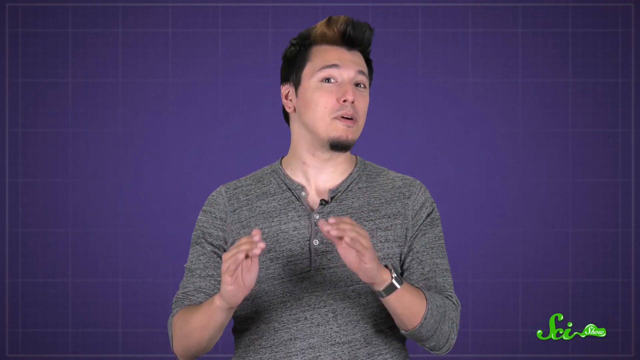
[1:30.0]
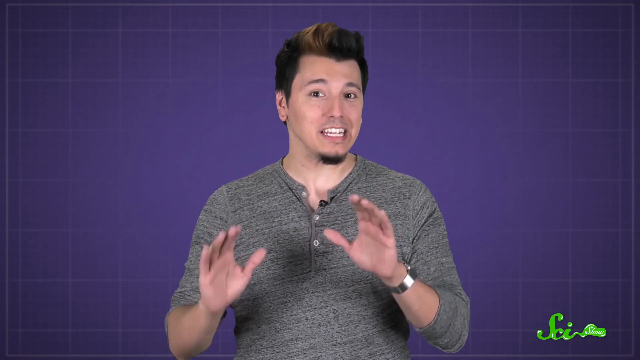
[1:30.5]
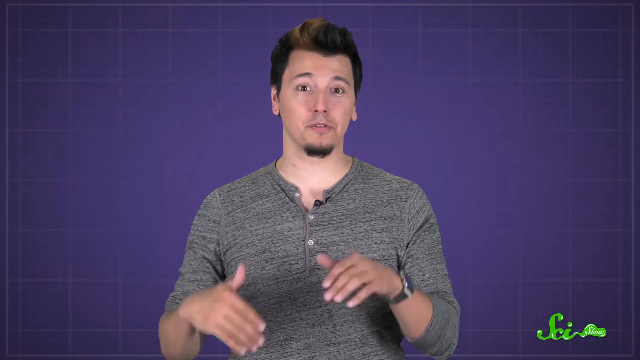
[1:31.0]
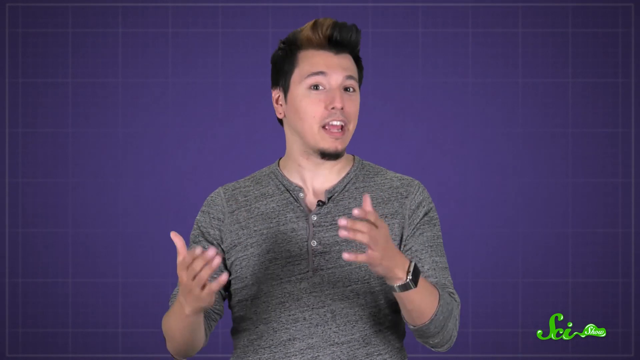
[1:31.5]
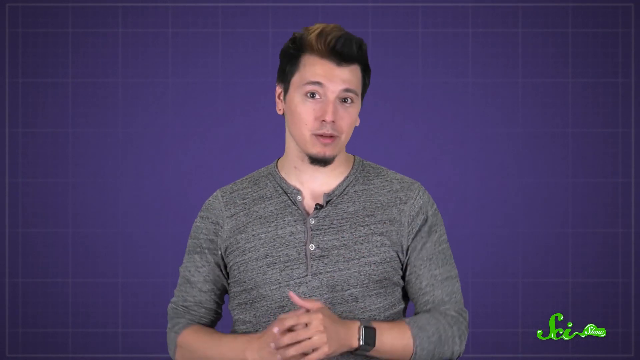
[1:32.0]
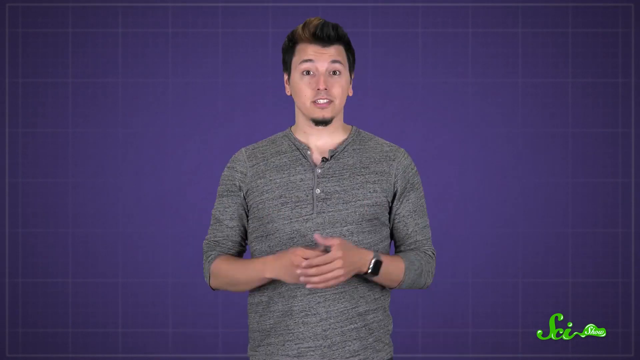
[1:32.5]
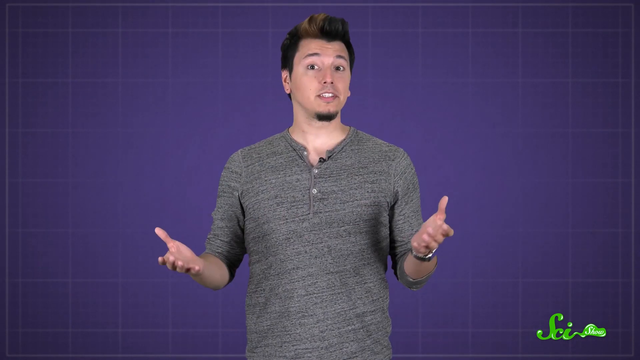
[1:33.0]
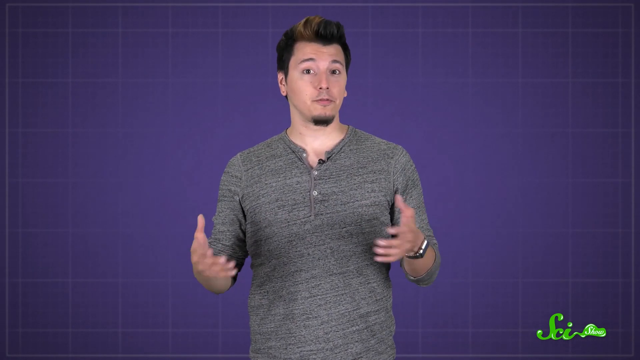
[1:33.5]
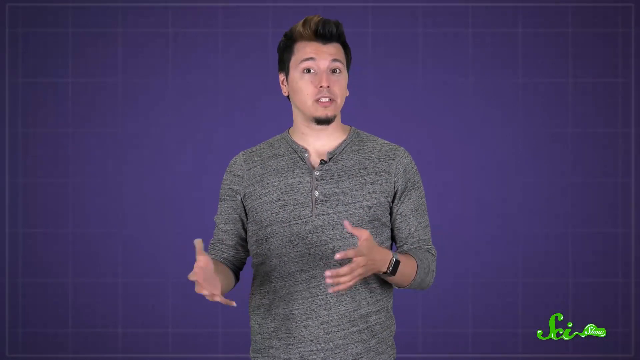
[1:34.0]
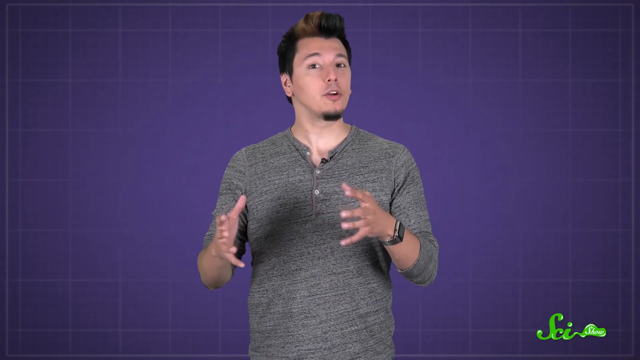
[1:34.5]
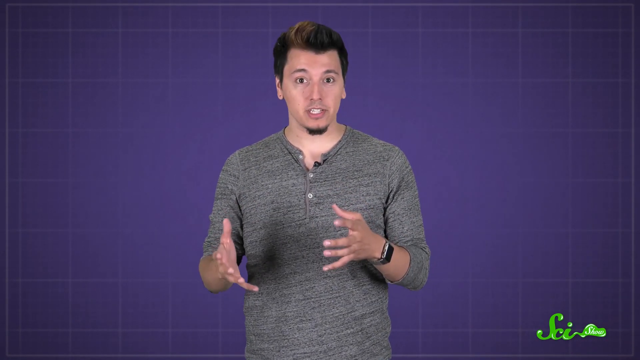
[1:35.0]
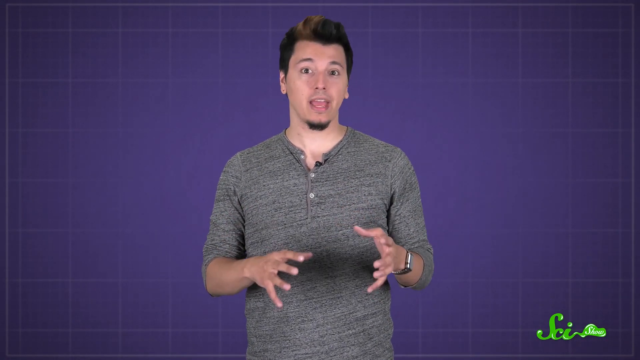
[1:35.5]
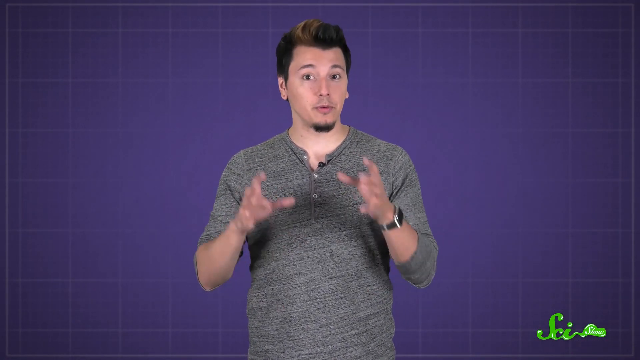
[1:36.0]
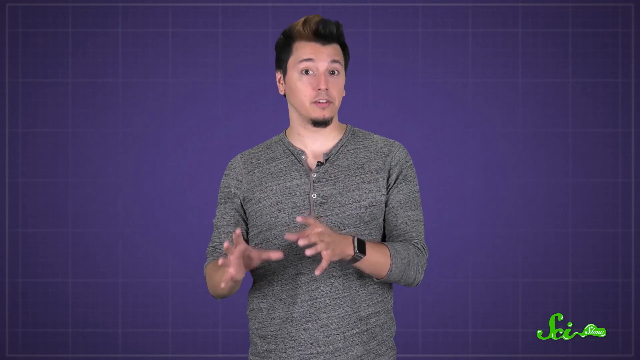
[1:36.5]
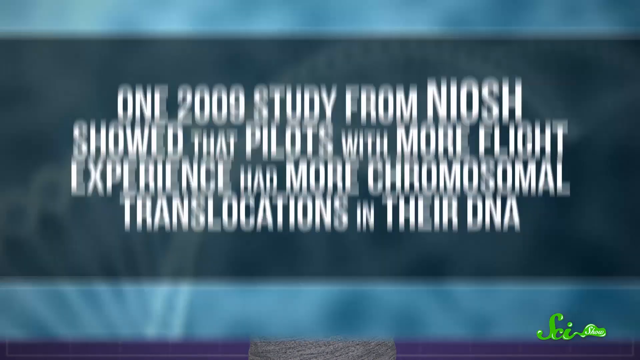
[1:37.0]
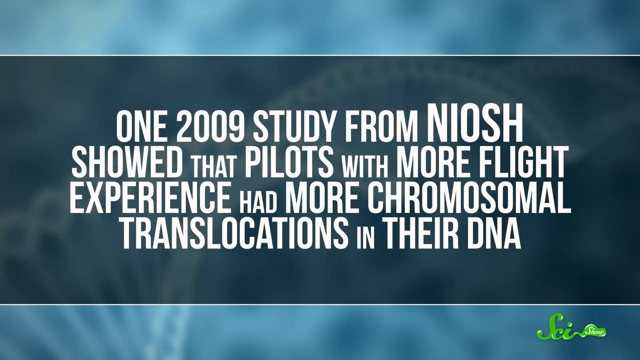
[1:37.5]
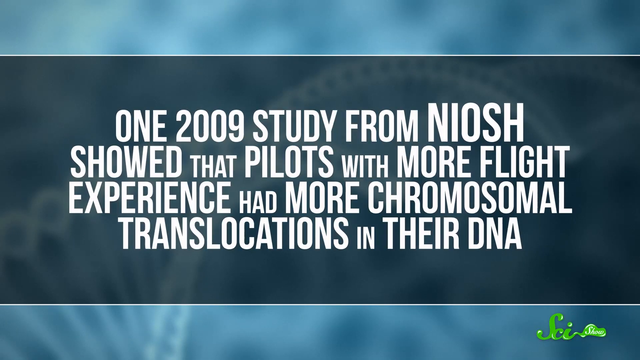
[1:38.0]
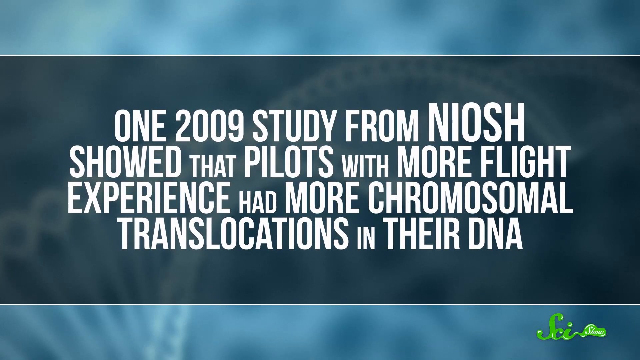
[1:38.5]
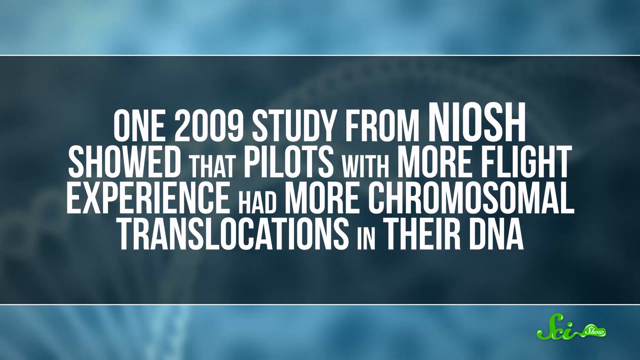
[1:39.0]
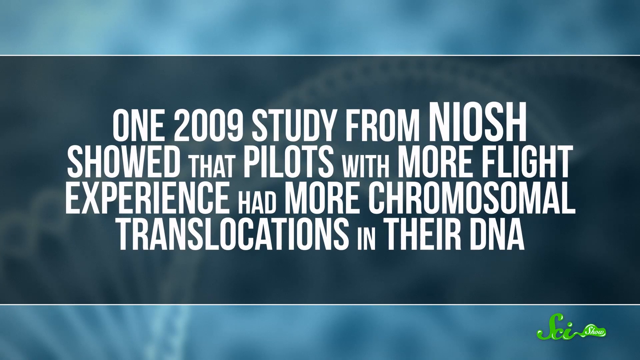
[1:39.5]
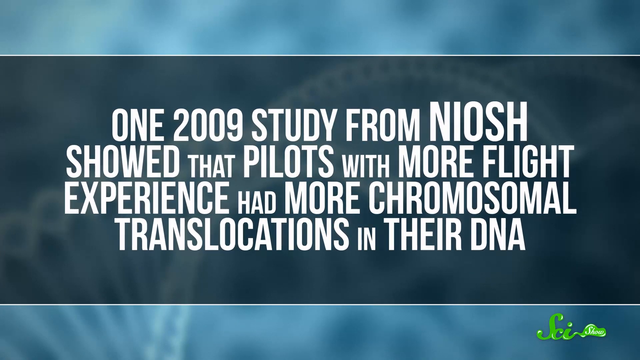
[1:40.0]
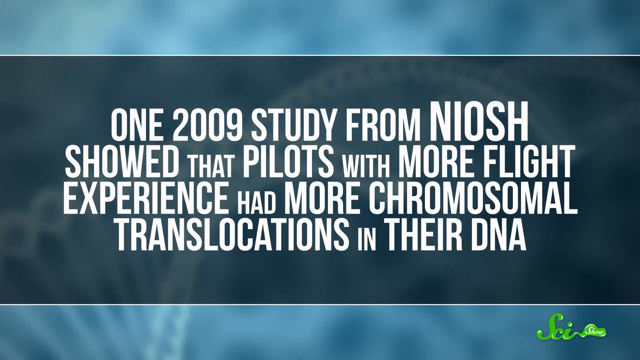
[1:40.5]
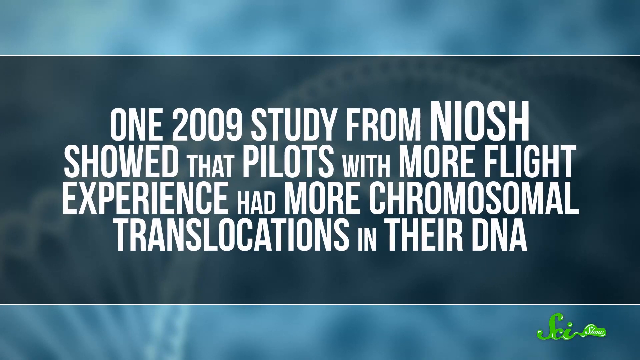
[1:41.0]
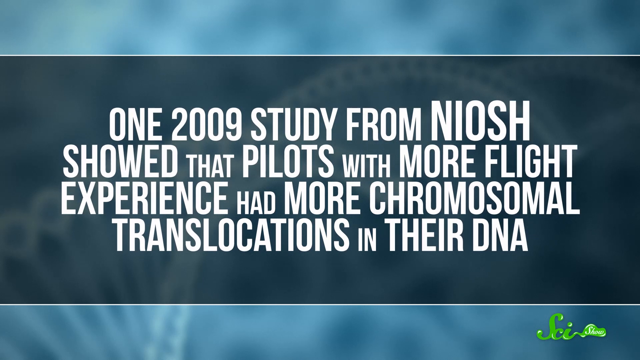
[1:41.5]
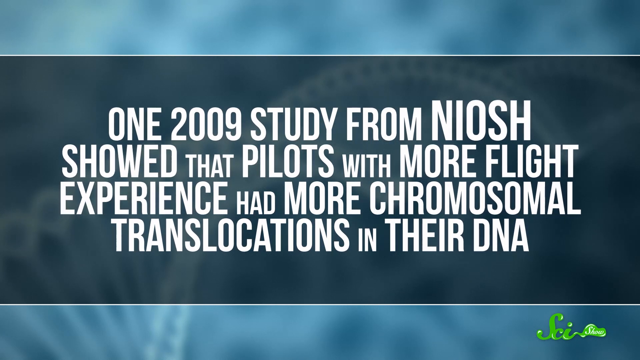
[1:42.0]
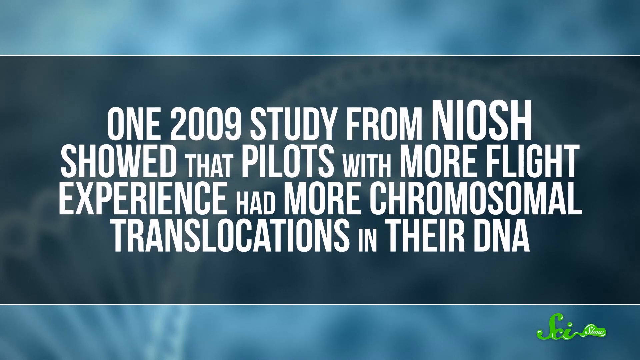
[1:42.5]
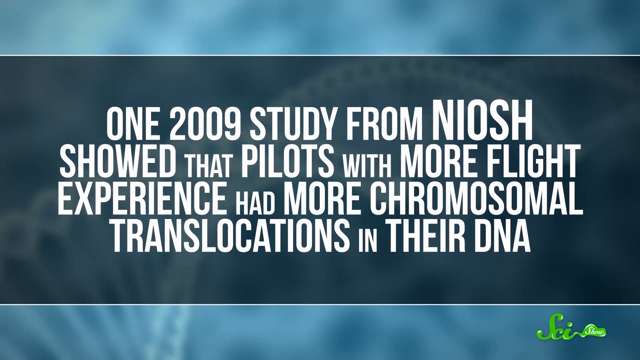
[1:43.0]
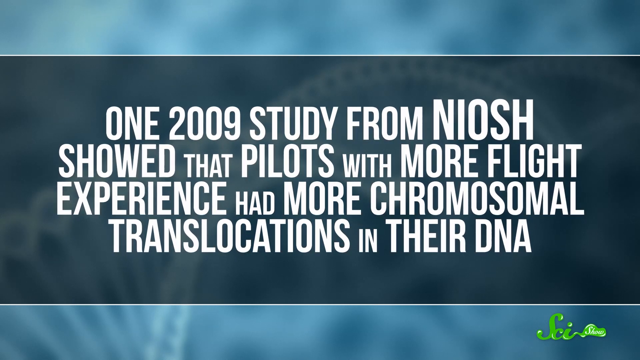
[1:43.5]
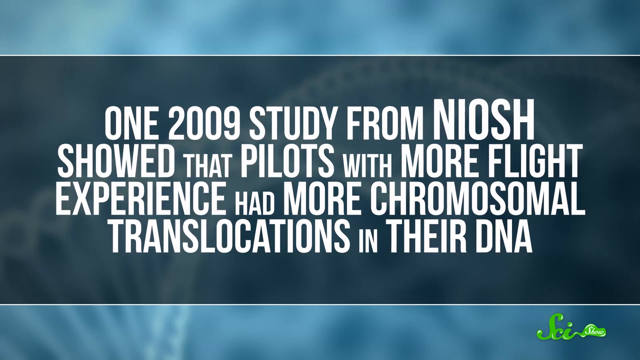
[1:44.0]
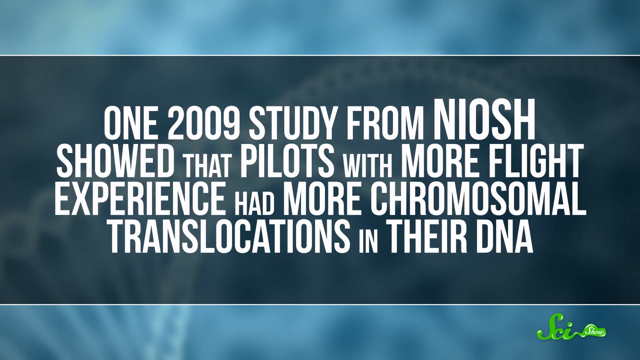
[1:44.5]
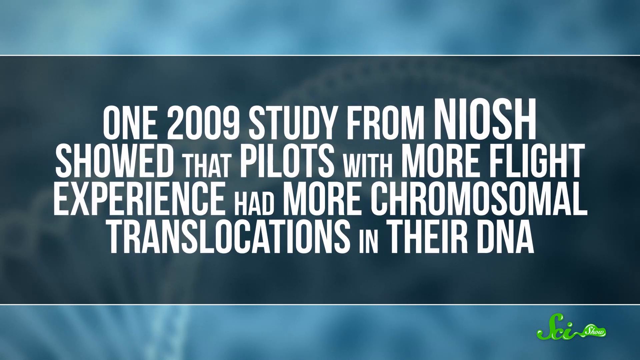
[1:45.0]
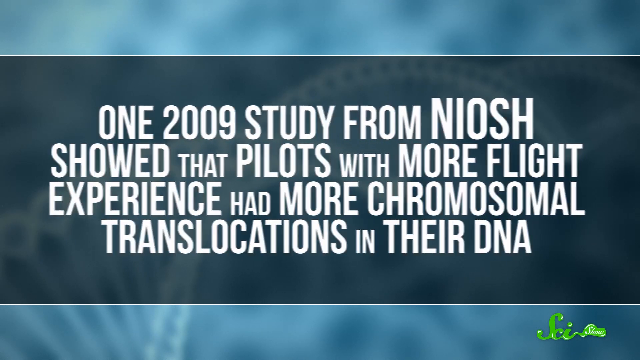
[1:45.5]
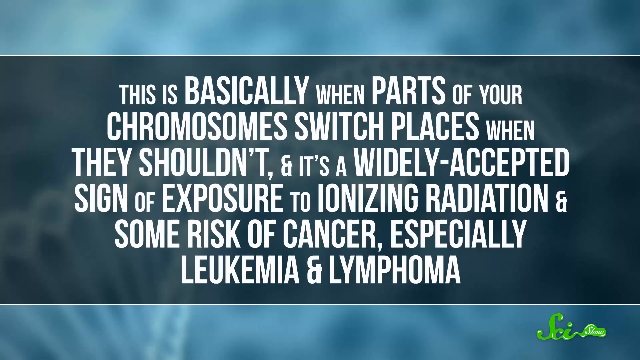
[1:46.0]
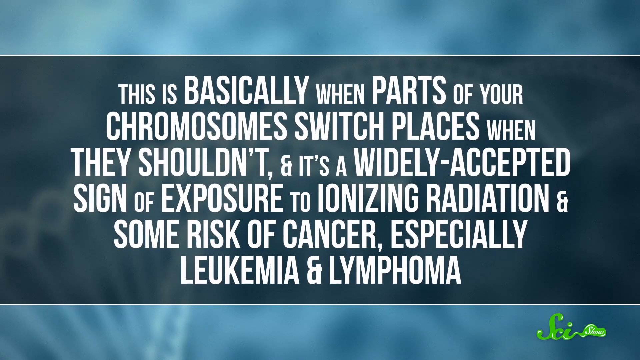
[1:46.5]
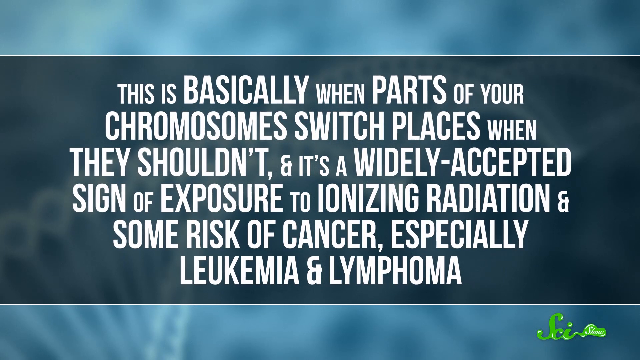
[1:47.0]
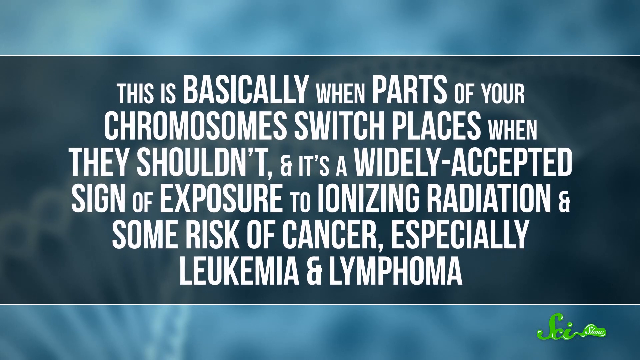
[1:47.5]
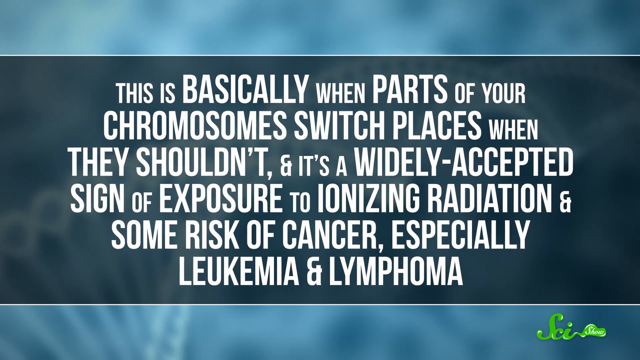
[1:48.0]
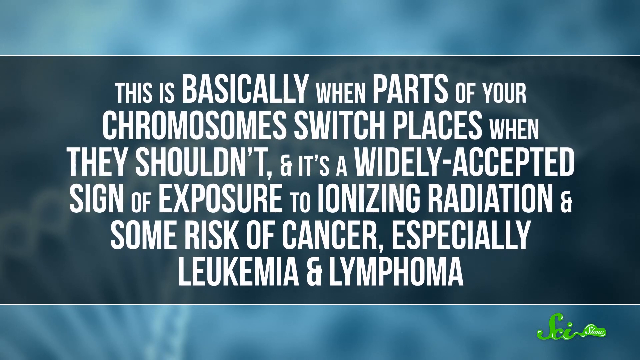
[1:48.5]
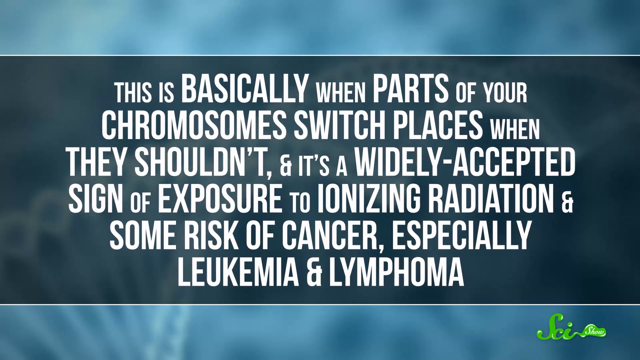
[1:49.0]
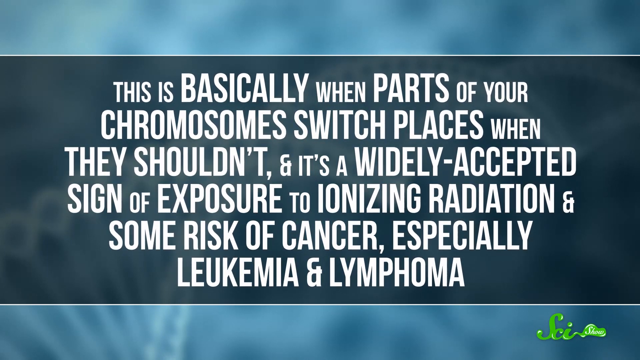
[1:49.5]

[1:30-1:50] The narrator is in the center of the screen, looking directly at the camera, his hands very expressive as he speaks. After a few moments he disappears as the screen transitions to a bluish-whitish background with a central banner text box dominating the screen. In the background are what appear to be organic patterns, almost reminiscent of DNA strands. Superimposed in large white text is the statement: "One 2009 study from NIOSH showed that pilots with more flight experience had more chromosomal translocations in their DNA". After a few moments it moves quickly off to the left and is replaced by another statement in large white characters: "This is basically when parts of your chromosomes switch places when they shouldn't, and it's a widely accepted sign of exposure to ionizing radiation and some risk of cancer, especially leukemia and lymphoma". The text remains briefly, with a small SciShow logo down in the corner of the screen. The video then transitions back to the narrator.